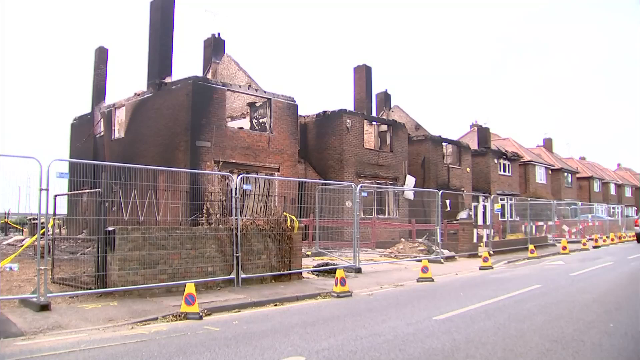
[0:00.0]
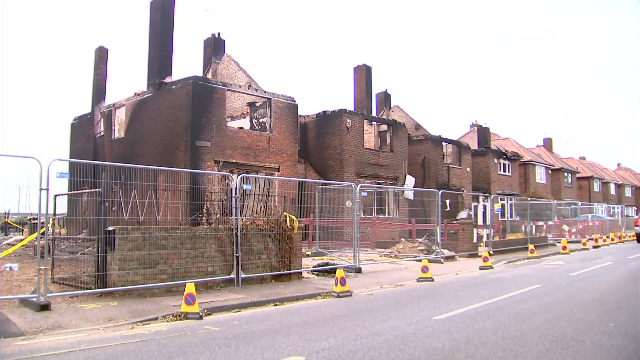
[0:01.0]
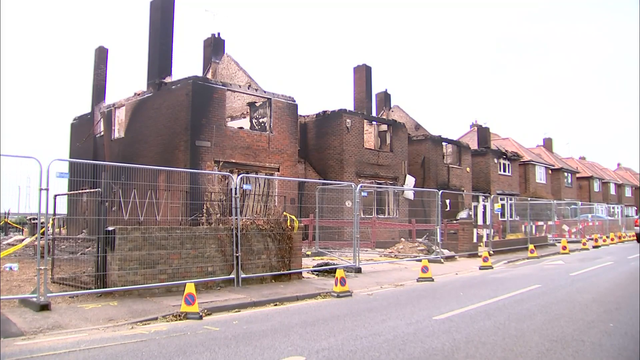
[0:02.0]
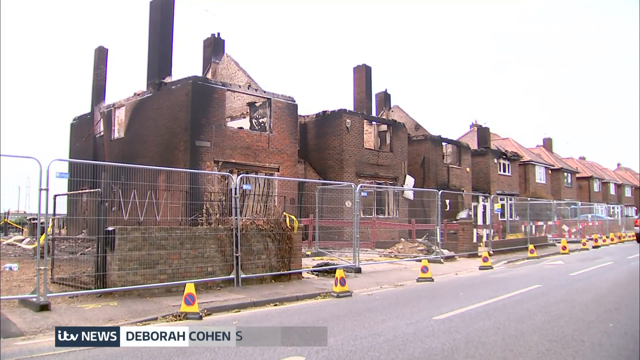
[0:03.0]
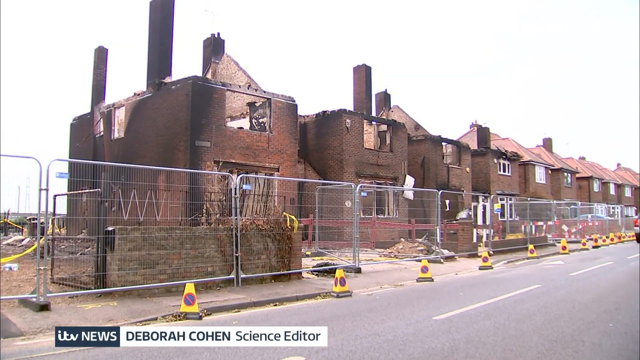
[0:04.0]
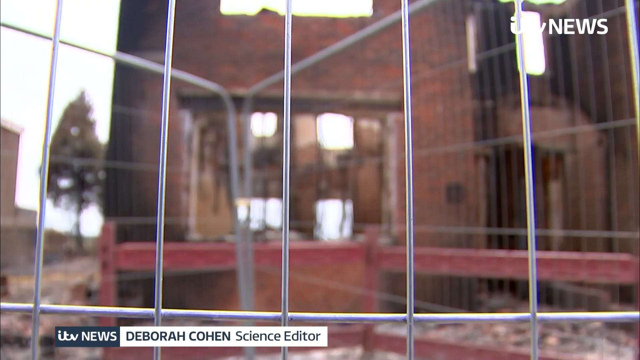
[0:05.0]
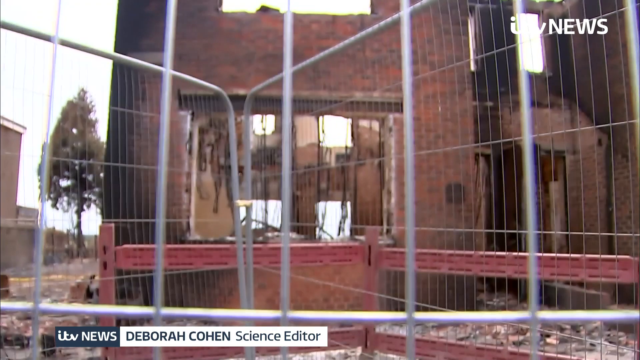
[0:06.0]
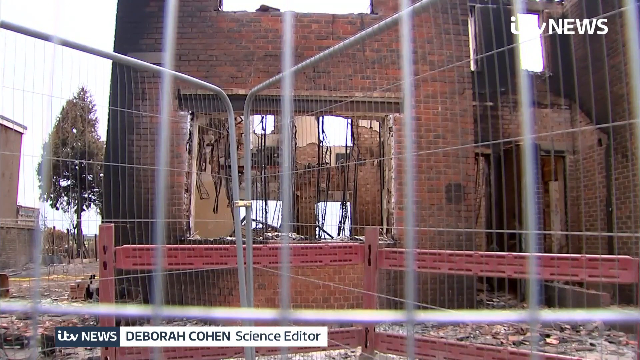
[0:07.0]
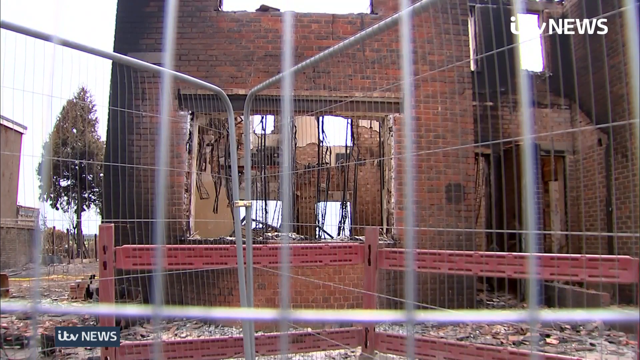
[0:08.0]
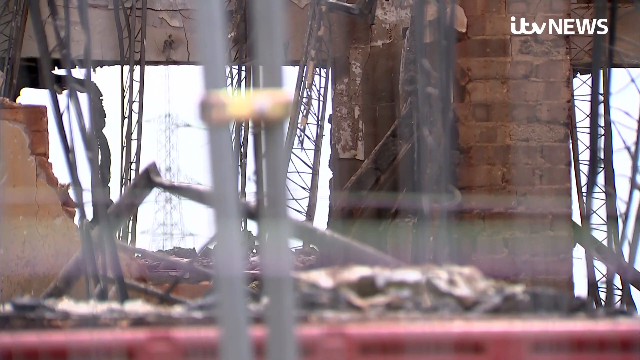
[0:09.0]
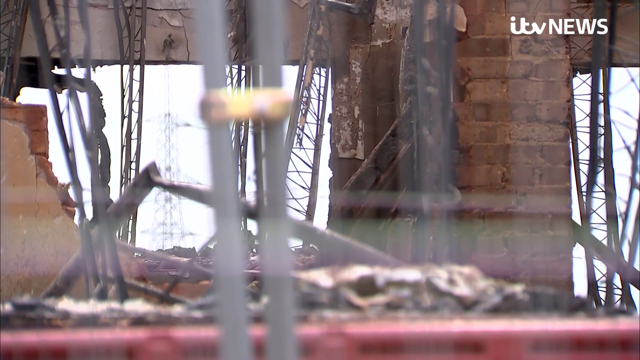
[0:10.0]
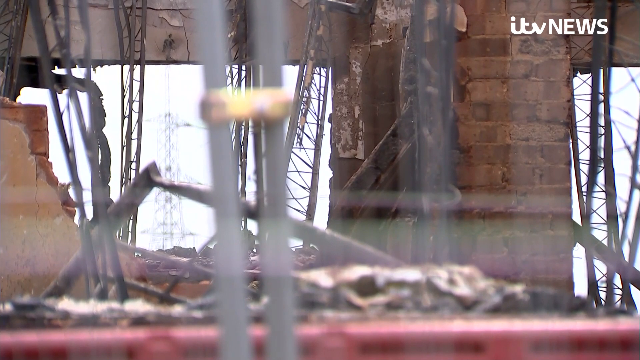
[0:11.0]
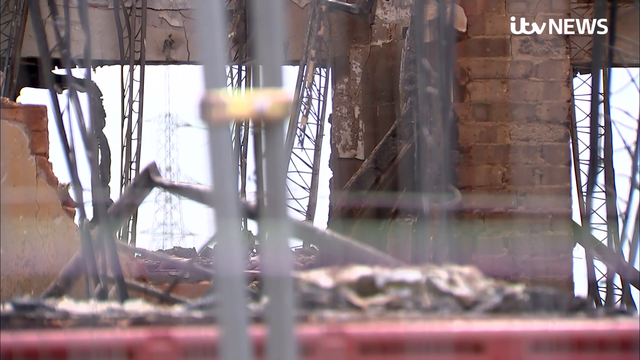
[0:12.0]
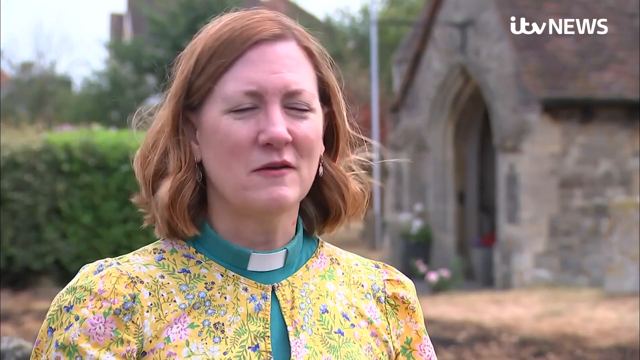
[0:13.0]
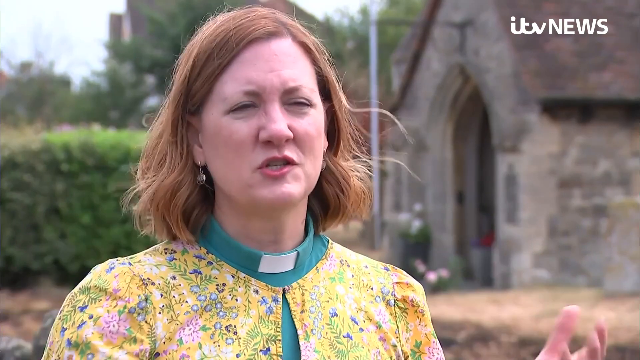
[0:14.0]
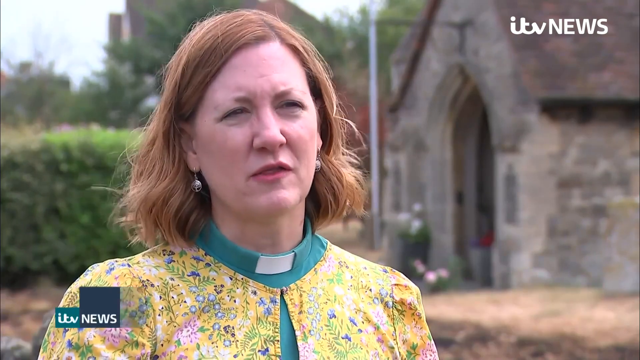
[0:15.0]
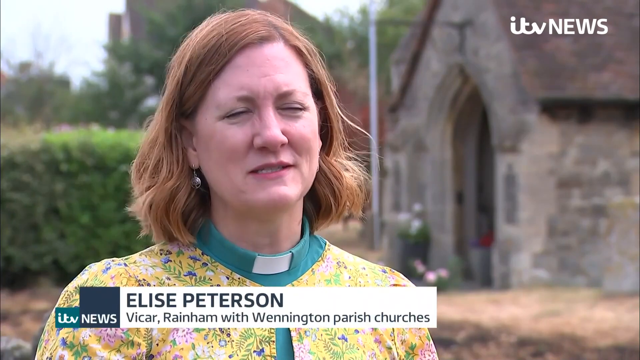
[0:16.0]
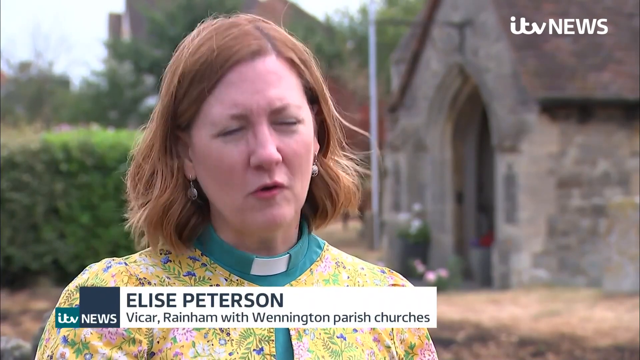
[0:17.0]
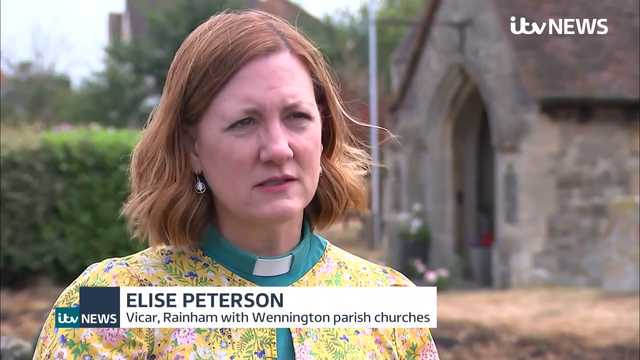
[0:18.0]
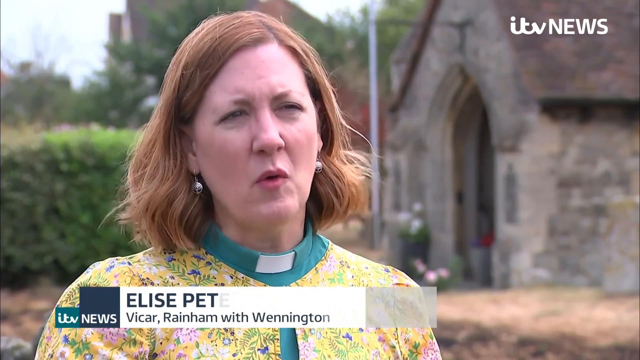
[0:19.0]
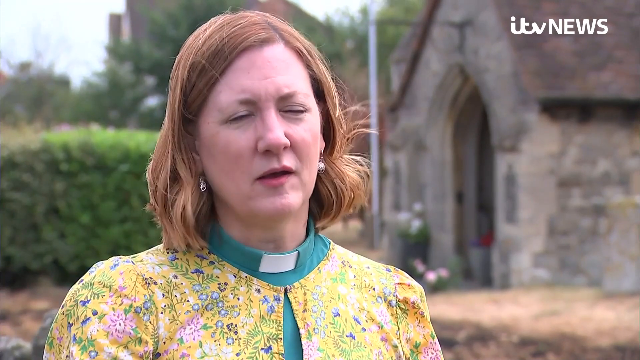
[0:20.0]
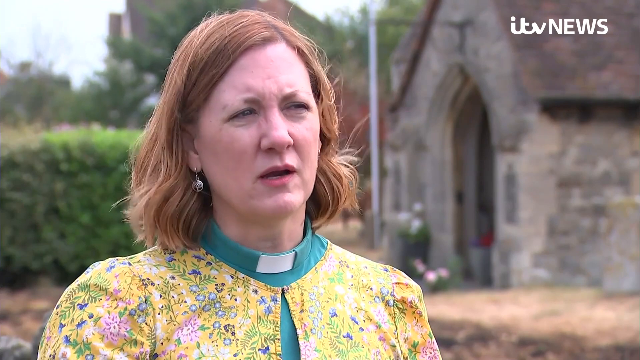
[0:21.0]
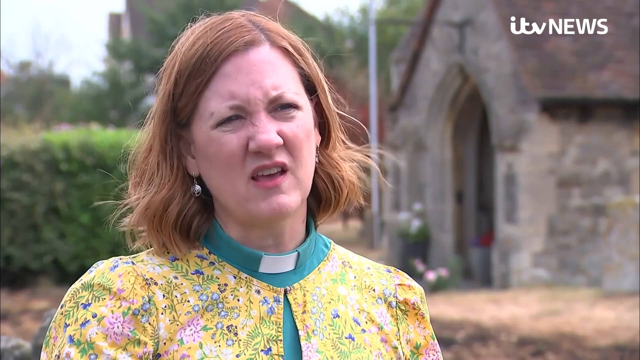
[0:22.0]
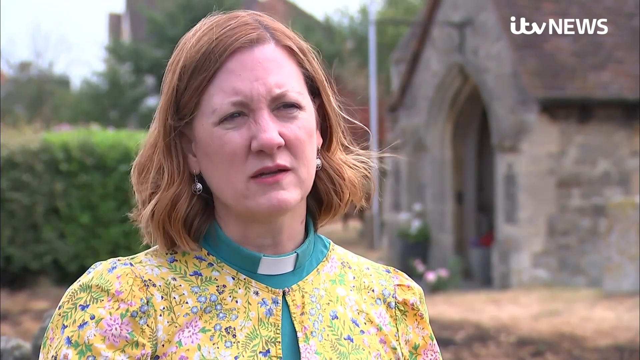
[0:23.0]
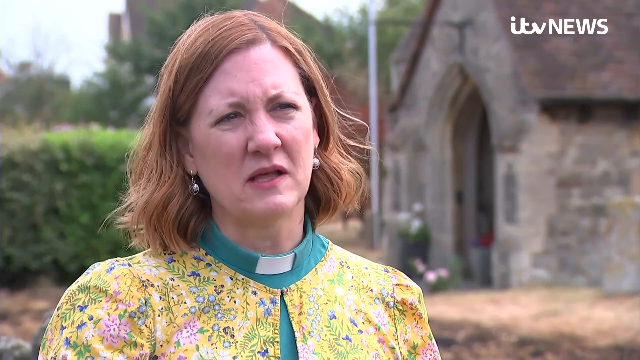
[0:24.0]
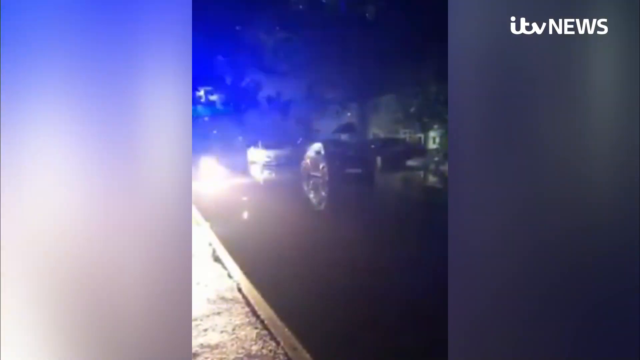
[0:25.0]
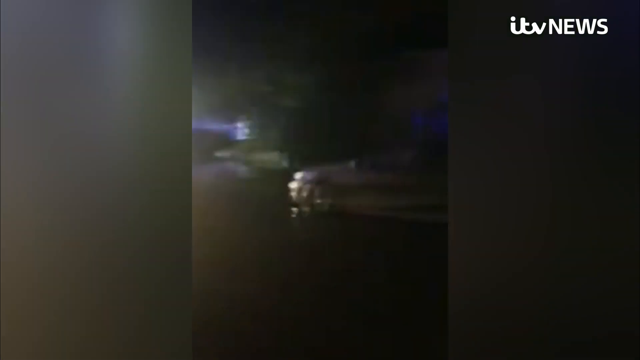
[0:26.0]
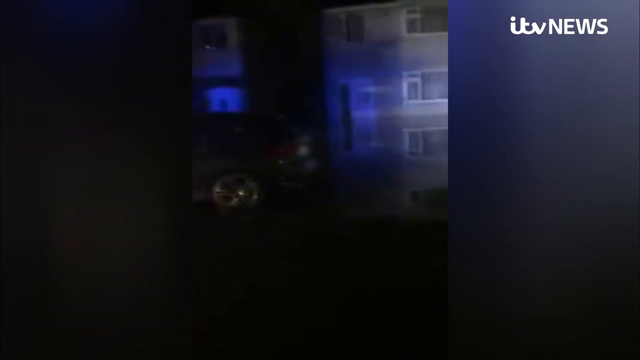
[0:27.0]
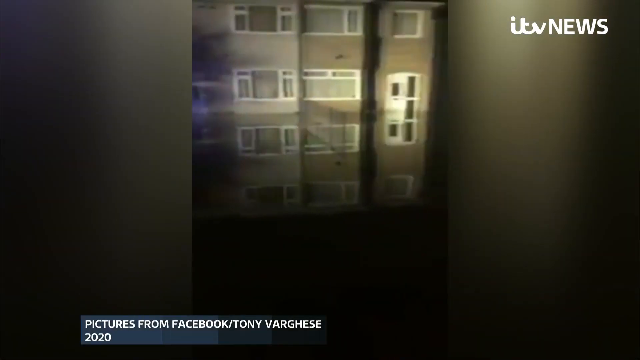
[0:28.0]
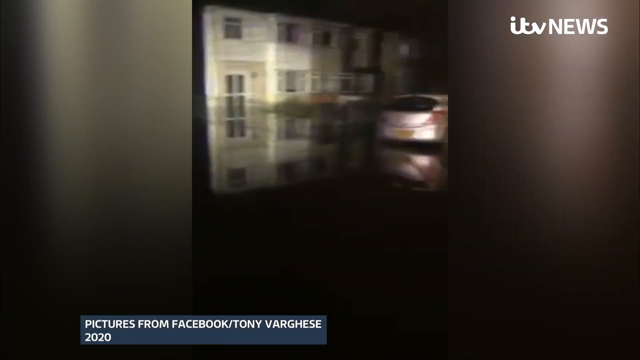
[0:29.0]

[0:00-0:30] A row of brick homes appears to be in the process of being torn down. Chain link fence runs all the way down the street in front of the homes, and yellow hazard cones with large red circles on them are in front of those gates. The houses in the foreground are all brick; the first three in a row have their roofs missing, and their doors and windows are gone. The chimneys are still on top of the roofs. The view then moves to the fence, looking directly through into an opening where a window used to be, with a lot of black wires hanging down in that opening of the brick building. Another view of the brick buildings follows through this open window area.